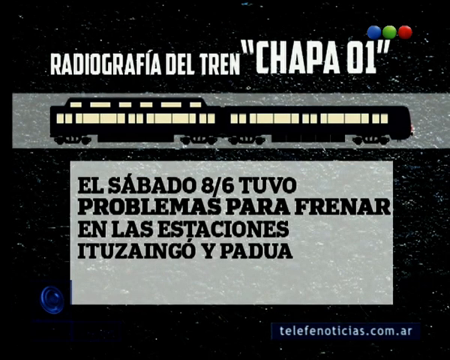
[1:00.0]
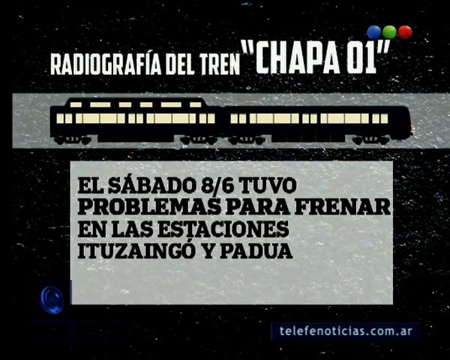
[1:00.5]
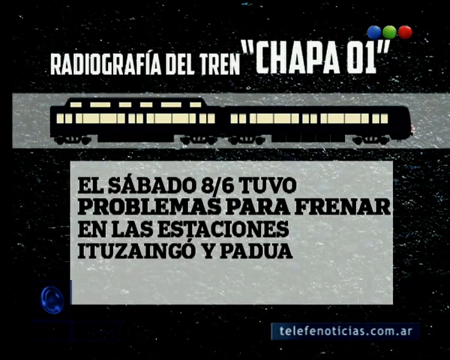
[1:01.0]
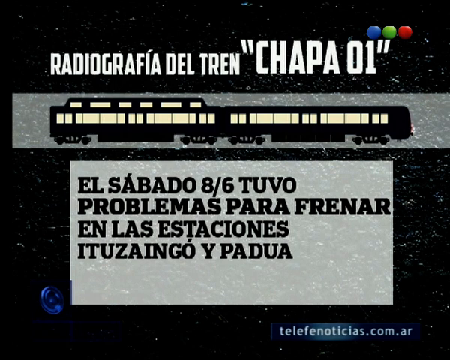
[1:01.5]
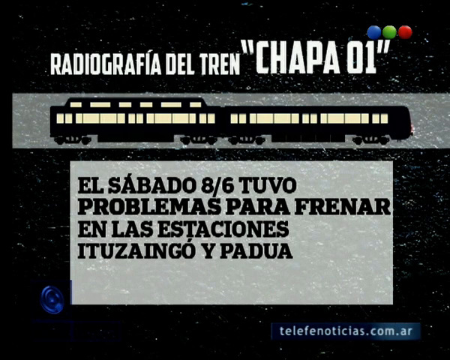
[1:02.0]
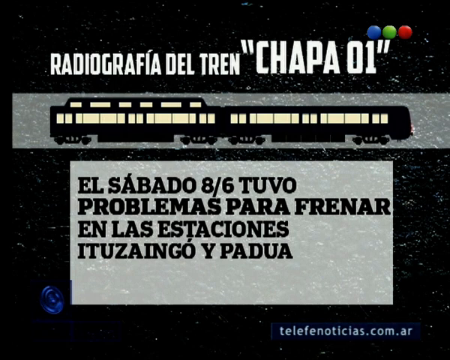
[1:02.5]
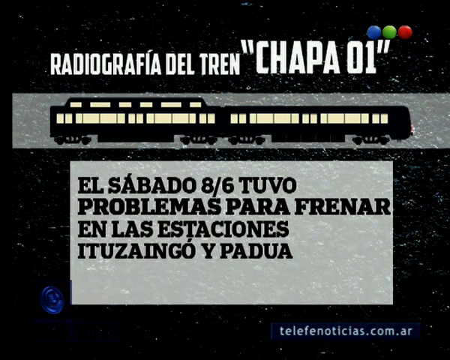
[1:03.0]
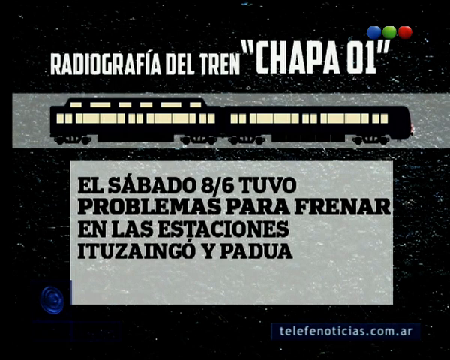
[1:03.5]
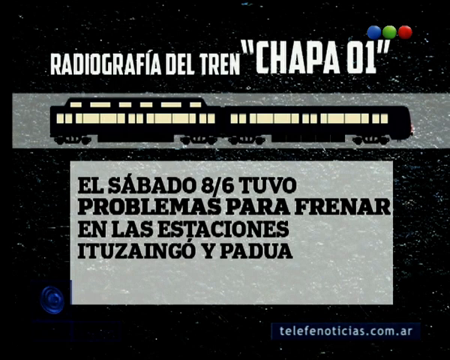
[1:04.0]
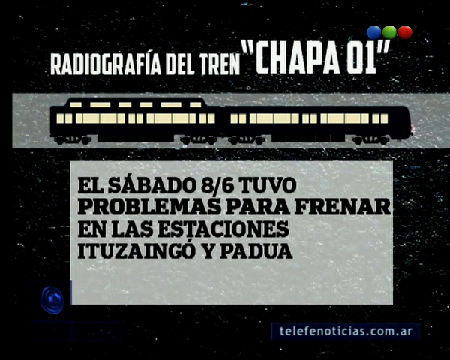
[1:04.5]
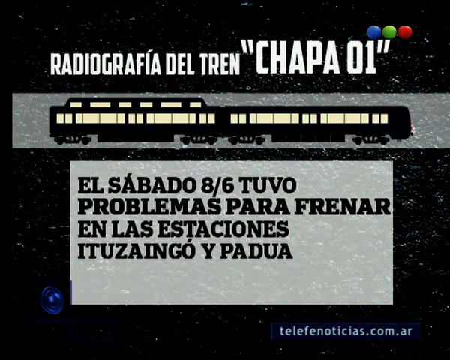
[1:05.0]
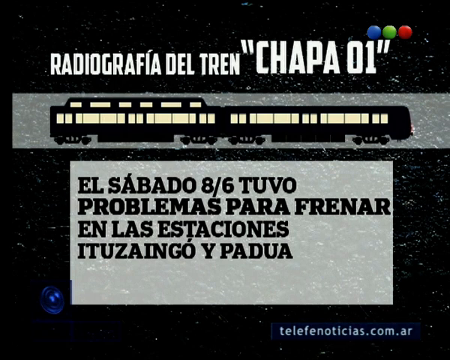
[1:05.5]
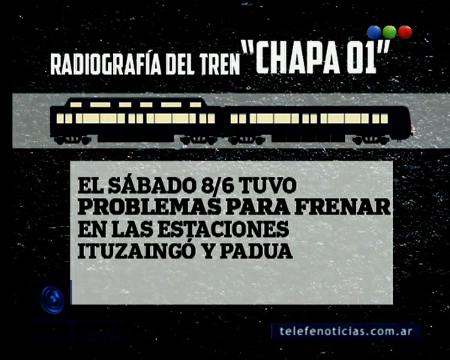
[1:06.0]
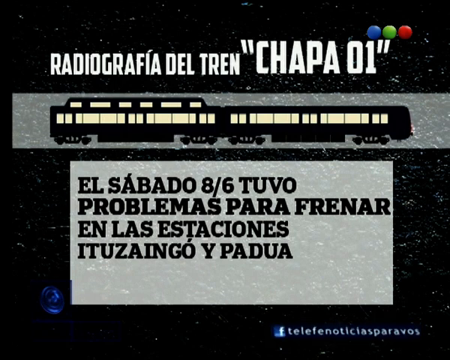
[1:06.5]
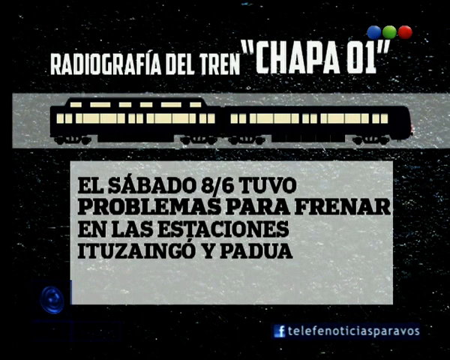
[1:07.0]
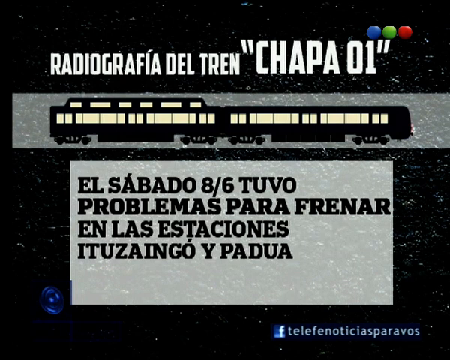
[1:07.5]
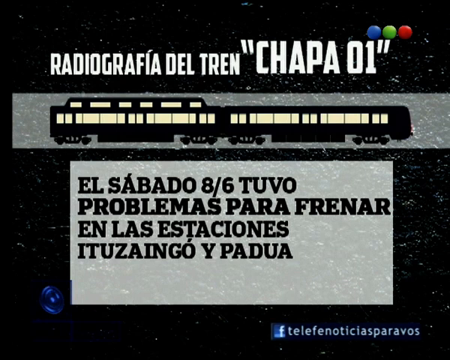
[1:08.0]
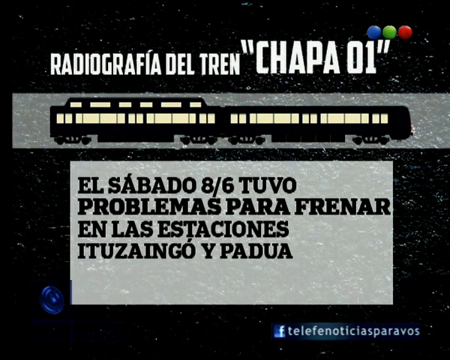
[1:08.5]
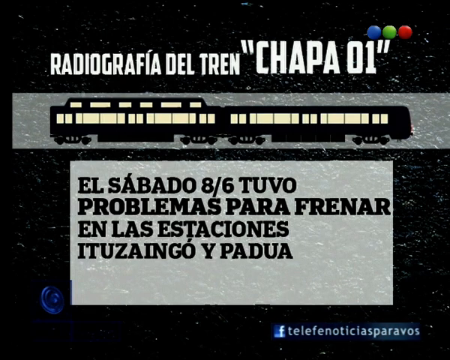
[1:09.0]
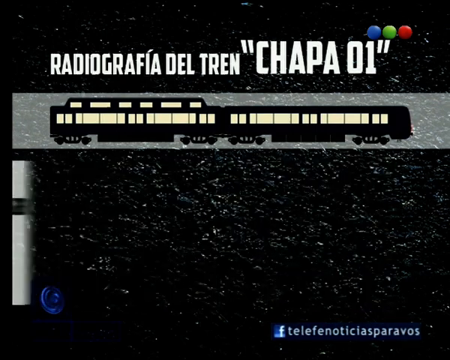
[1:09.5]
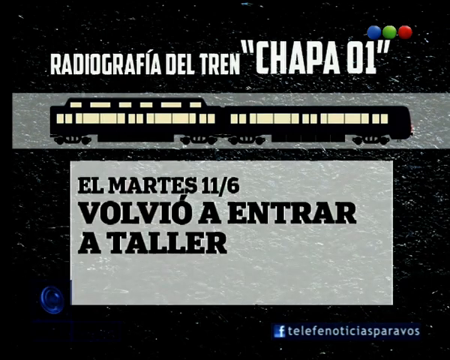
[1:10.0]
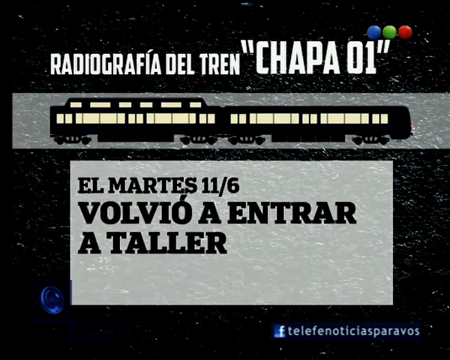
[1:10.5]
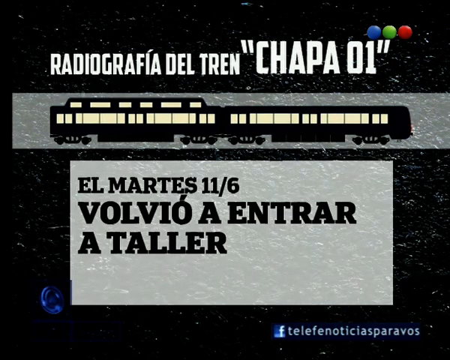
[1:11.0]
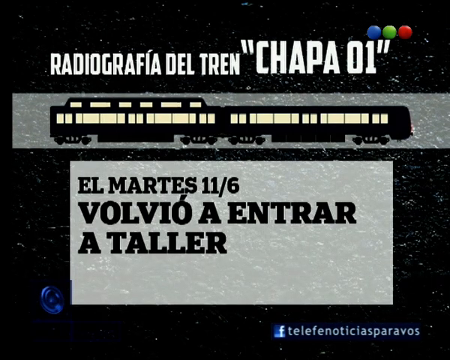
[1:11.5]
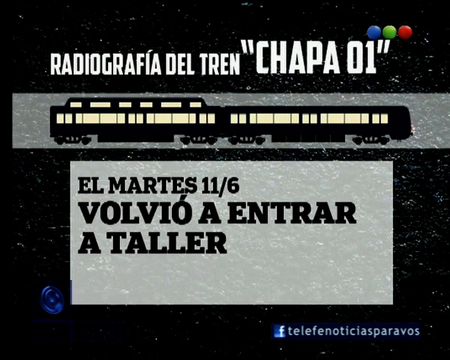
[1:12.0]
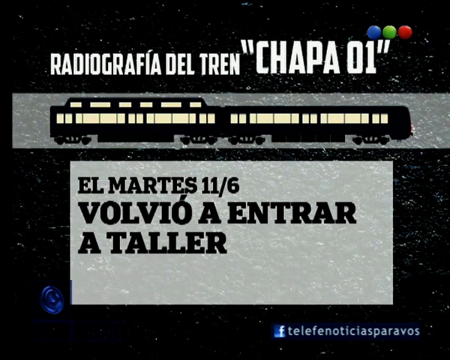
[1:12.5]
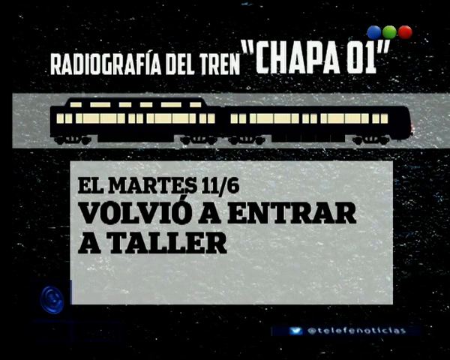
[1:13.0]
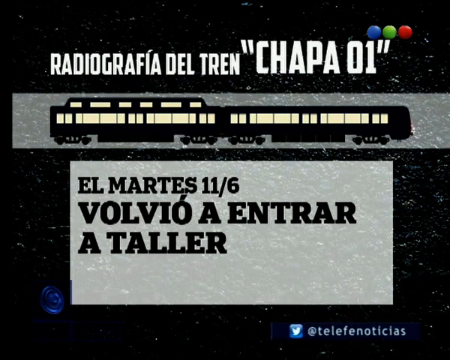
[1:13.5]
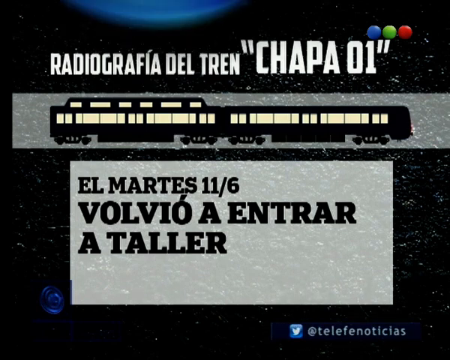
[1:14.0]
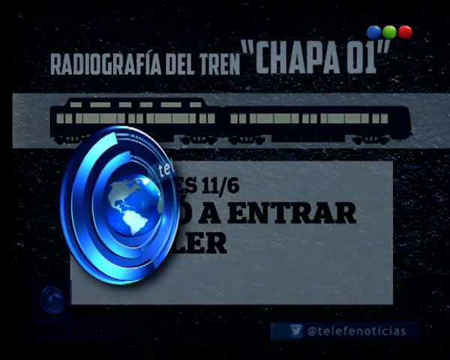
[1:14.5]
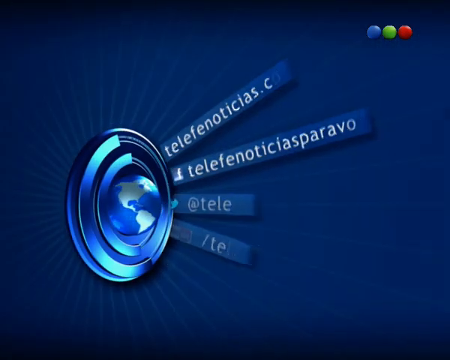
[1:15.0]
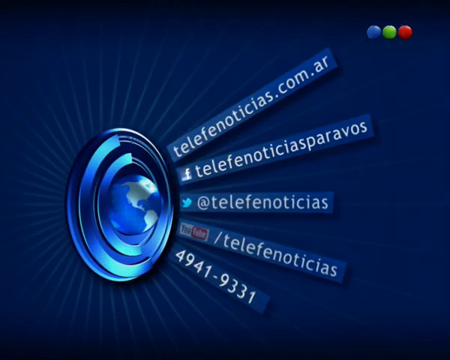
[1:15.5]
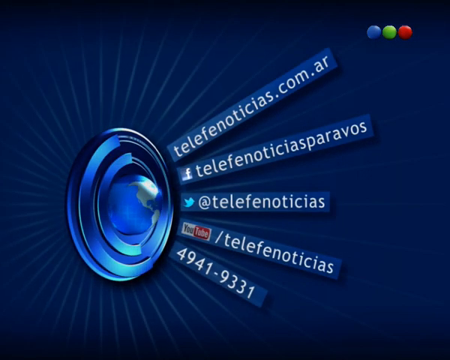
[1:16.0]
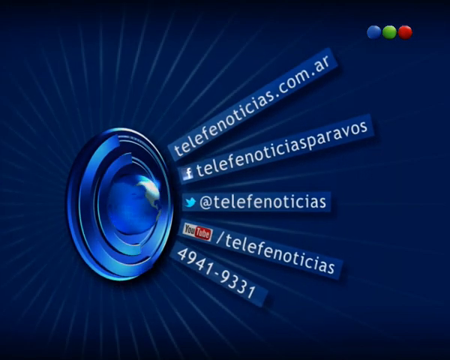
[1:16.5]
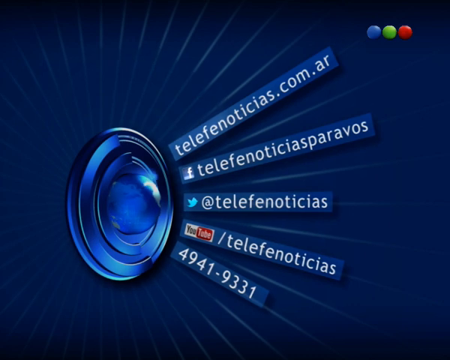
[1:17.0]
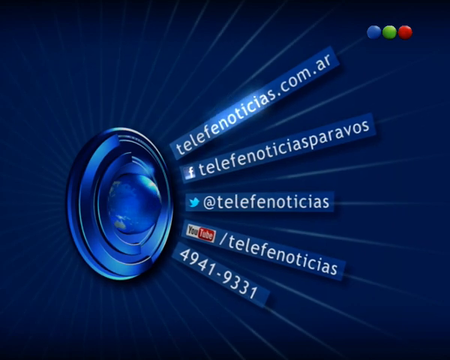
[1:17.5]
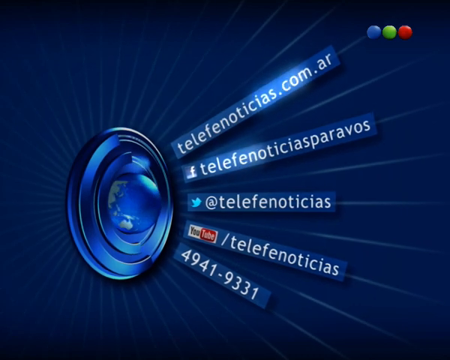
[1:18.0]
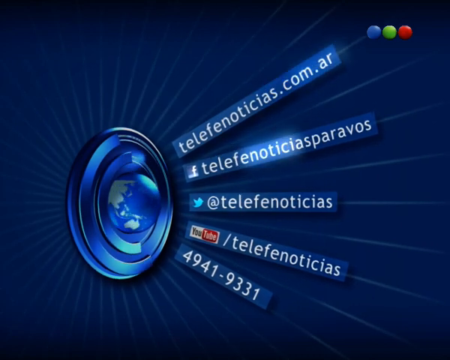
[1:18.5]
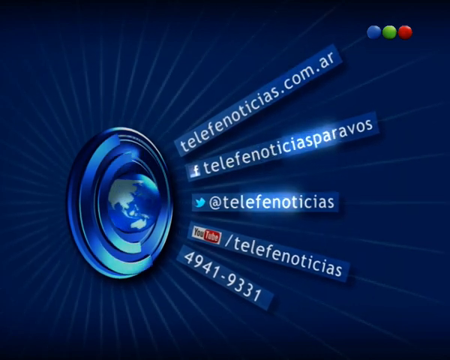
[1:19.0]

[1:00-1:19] Text appears that apparently translates to the train returning to the workshop on the 11th of June. The video ends with social media details: a Facebook name, "Telefonoticias" for Twitter, "Telefonoticias" for YouTube, and a code, "4941-9331."